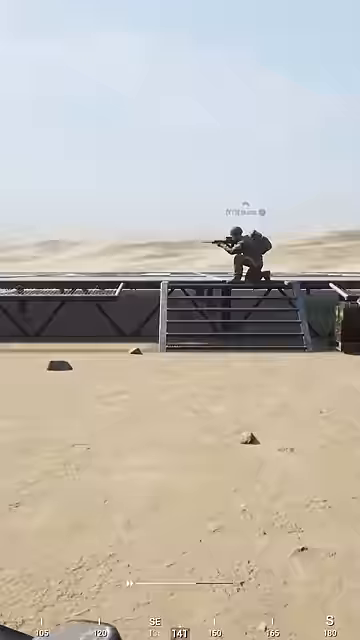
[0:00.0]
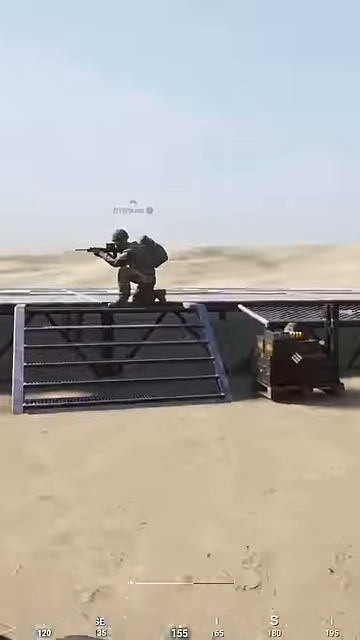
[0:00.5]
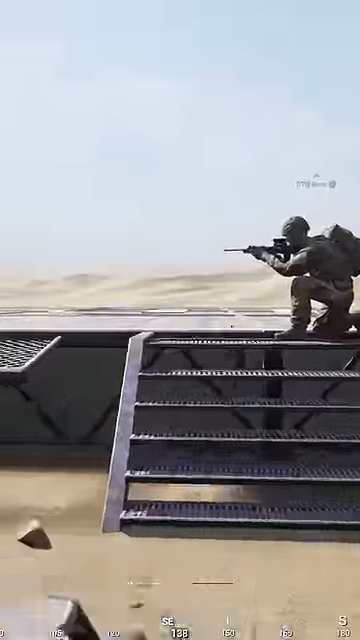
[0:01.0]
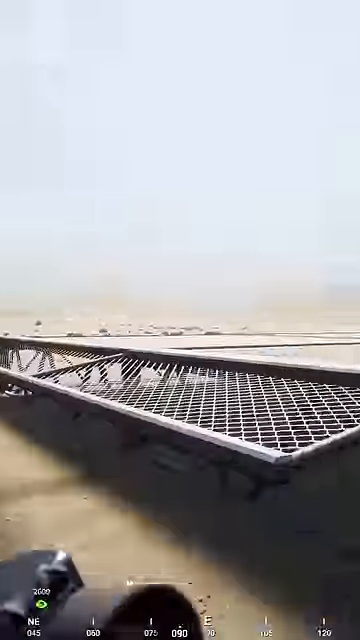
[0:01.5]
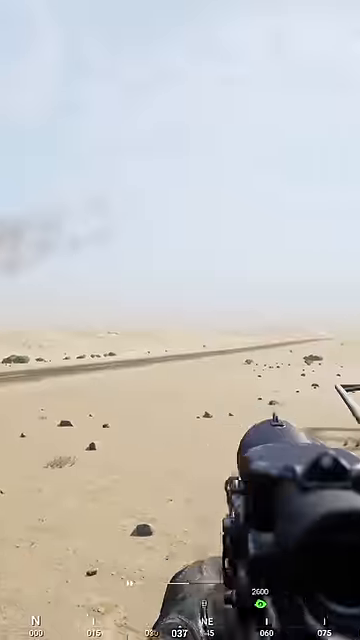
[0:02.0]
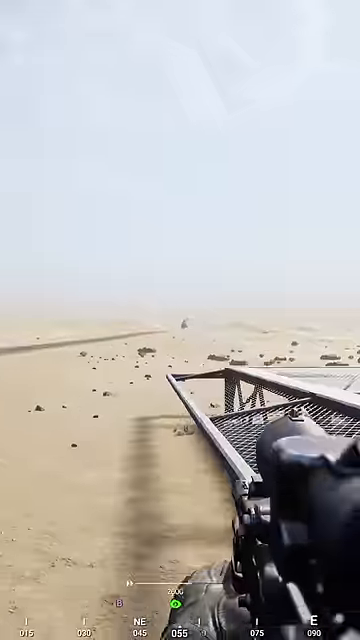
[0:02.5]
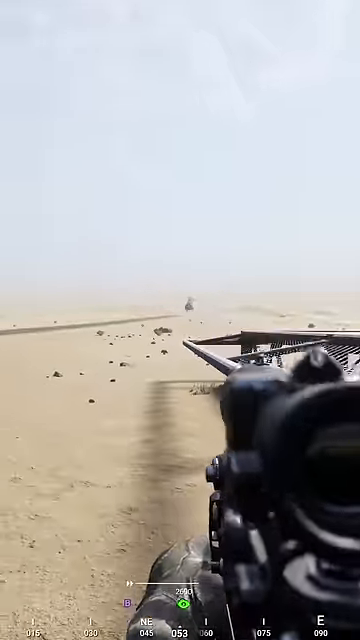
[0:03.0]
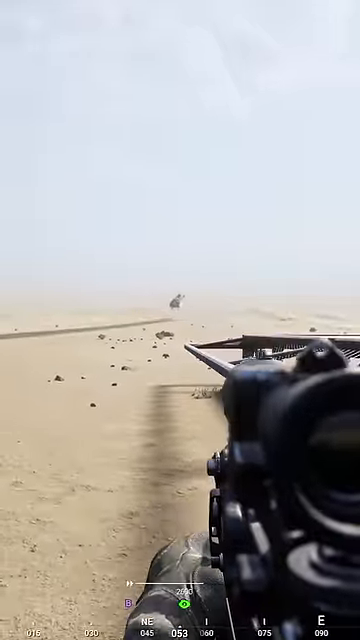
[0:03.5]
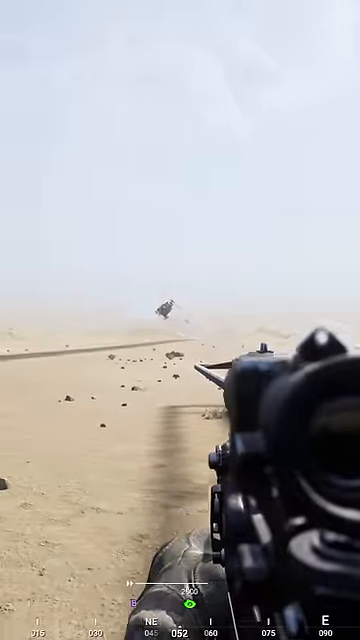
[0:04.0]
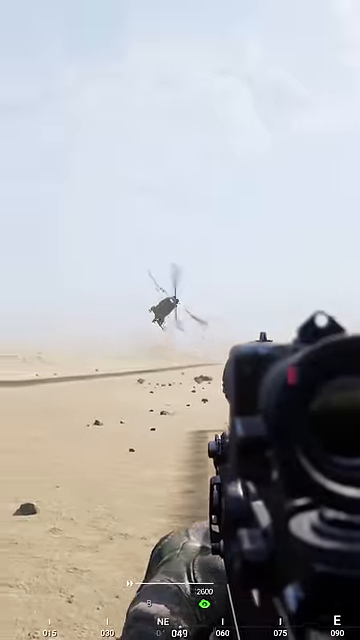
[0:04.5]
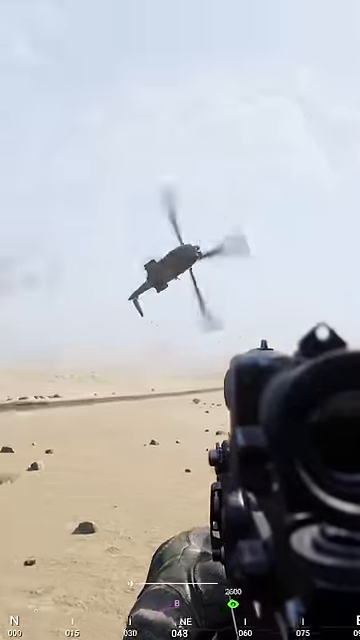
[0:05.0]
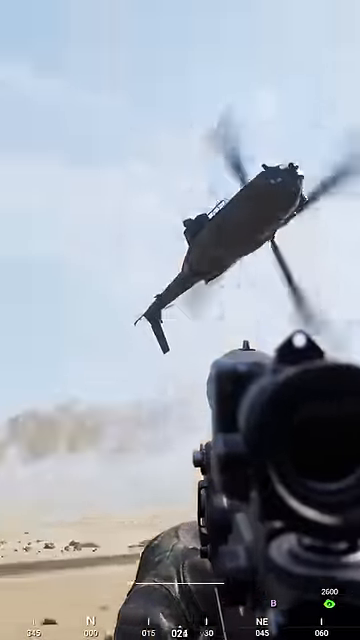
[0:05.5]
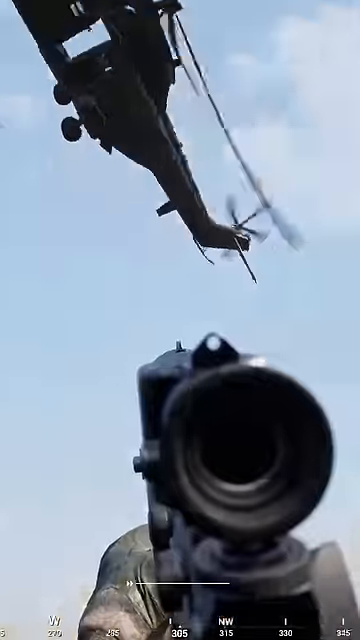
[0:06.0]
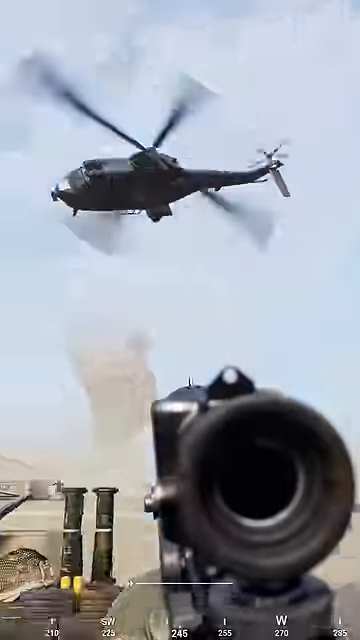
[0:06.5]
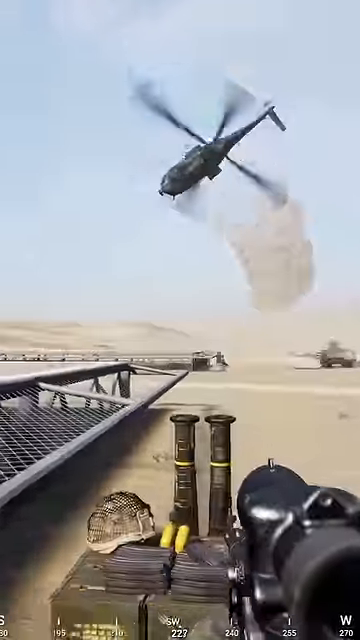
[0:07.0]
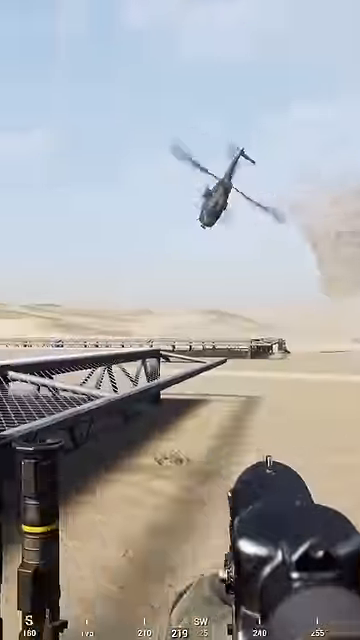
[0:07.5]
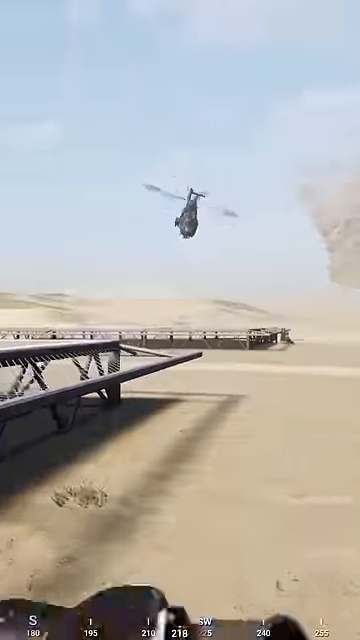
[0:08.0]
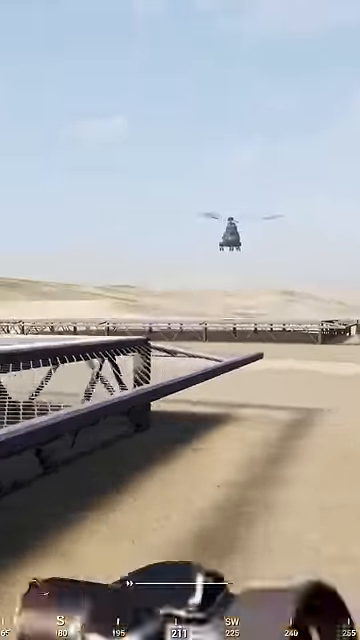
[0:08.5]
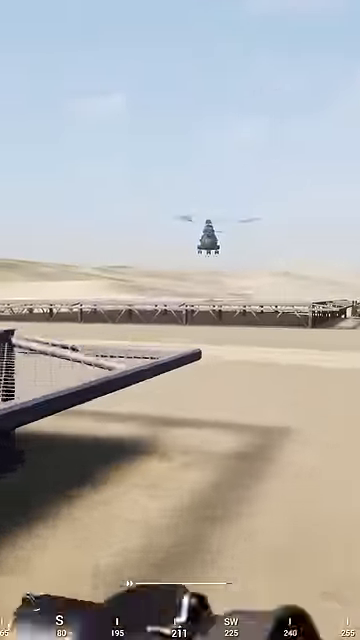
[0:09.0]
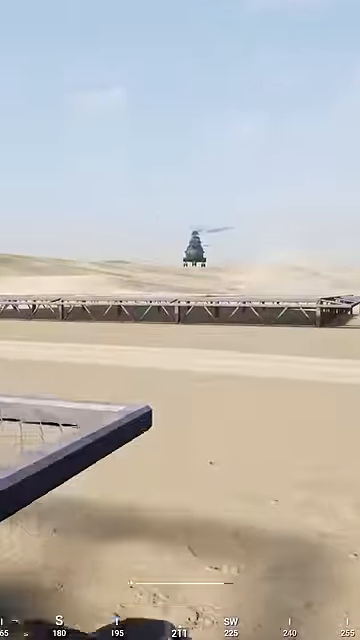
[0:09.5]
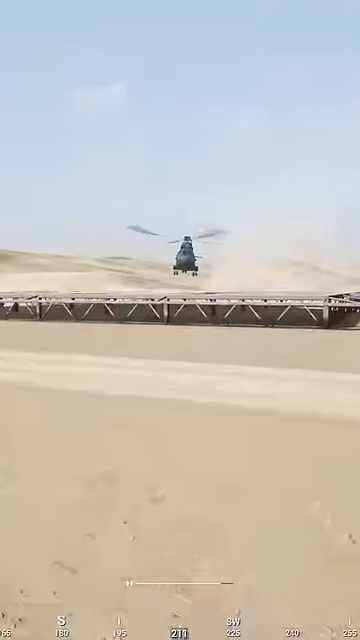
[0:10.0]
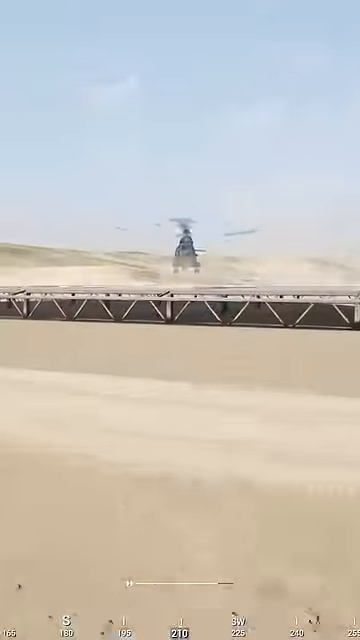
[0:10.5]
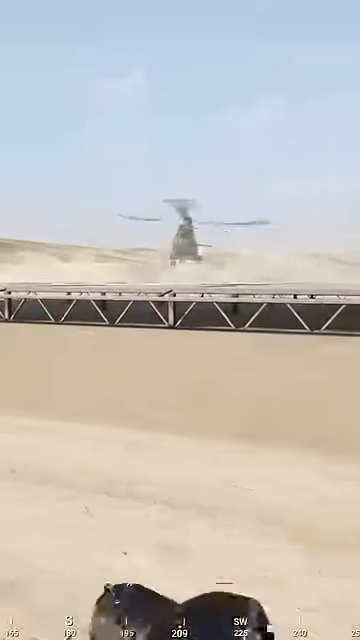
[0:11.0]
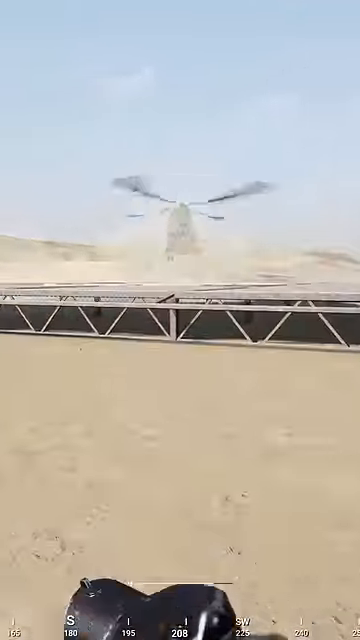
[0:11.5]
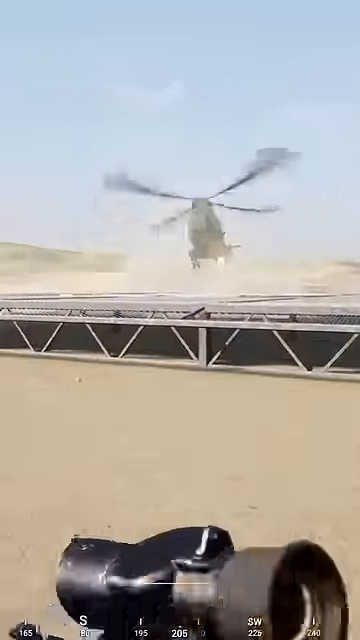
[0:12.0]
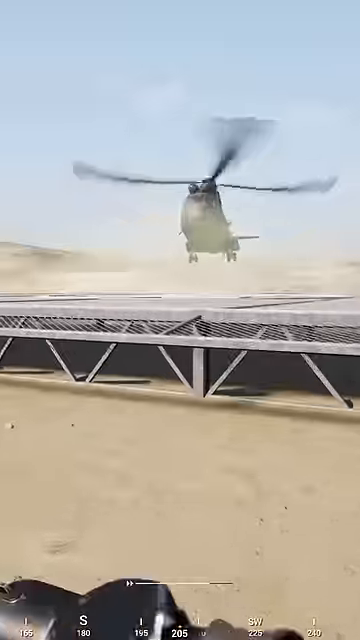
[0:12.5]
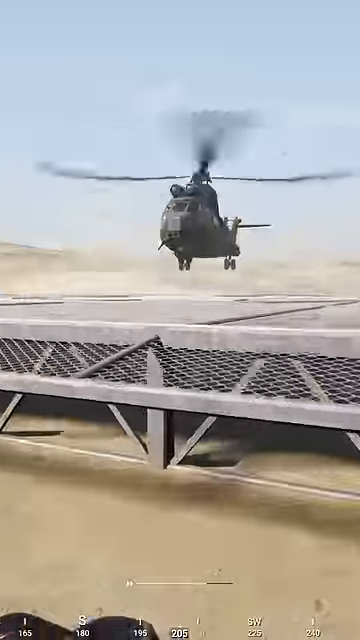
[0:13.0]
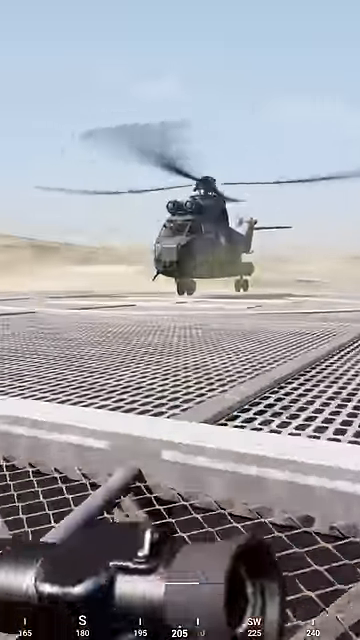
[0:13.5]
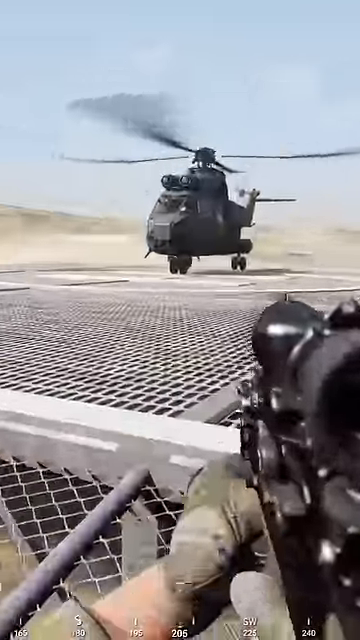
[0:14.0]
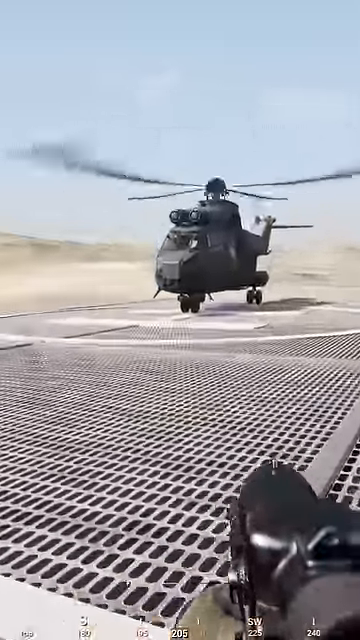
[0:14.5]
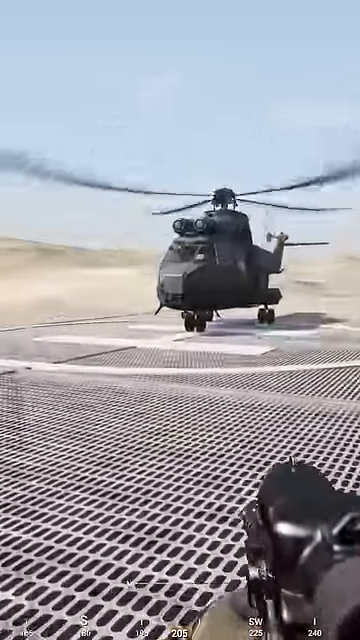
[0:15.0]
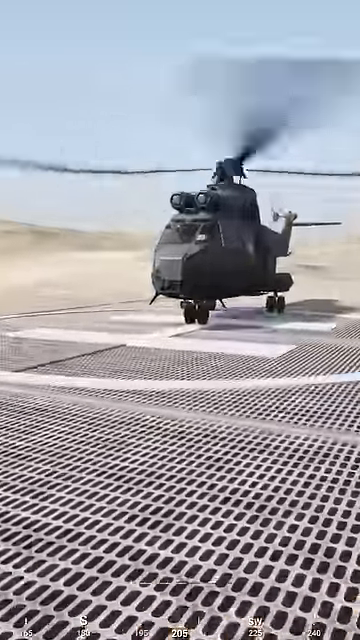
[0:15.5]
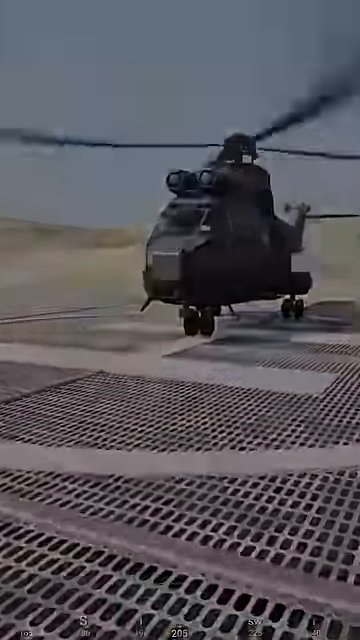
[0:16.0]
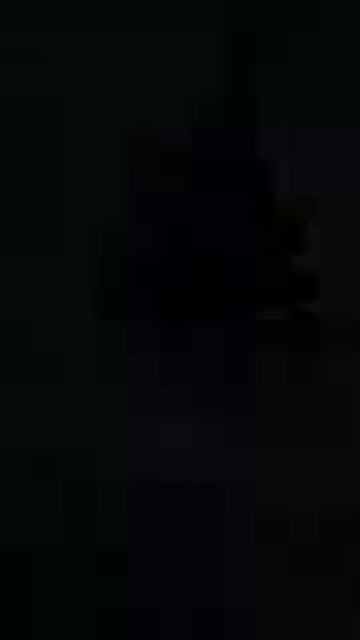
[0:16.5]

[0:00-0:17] First-person gameplay takes place in what appears to be a desert environment, with very light, yellow sand. Three rocks are shown in the front. There is a platform with steps leading up to it and pillars supporting it. A person is crouched down with a gun in their hands, aiming into the distance, with a pink indication above their name. The person runs with the gun in their hands towards the steps. A helicopter appears to be trying to turn and misses slightly, then lands on top of the platform. The person jumps to another platform to climb and walk towards the helicopter. The helicopter's blades are rolling, and the person is wearing green gloves. At the bottom are compass directions, southwest, west, south and north, with some numbers and some little lines. The gun sometimes appears slightly in view and then disappears.